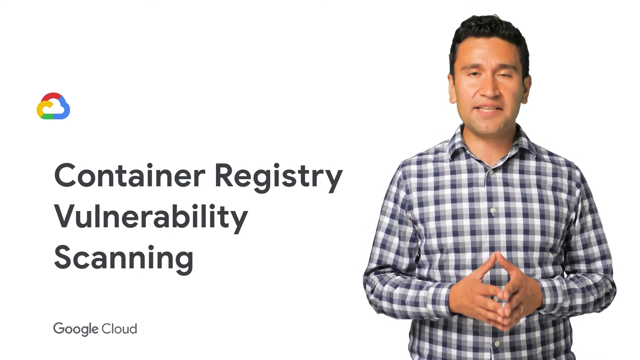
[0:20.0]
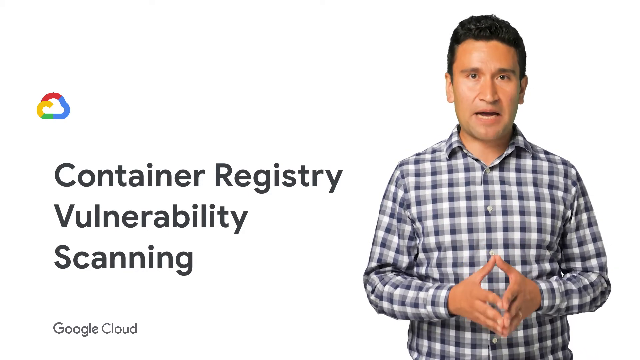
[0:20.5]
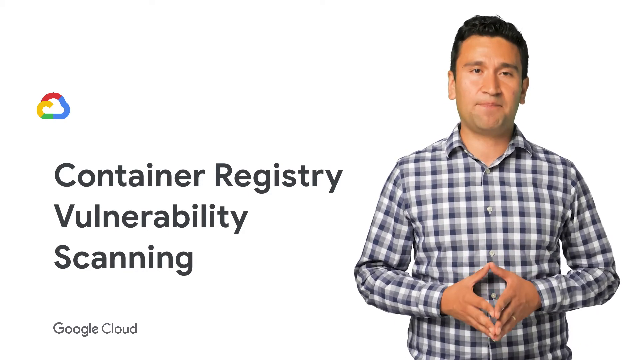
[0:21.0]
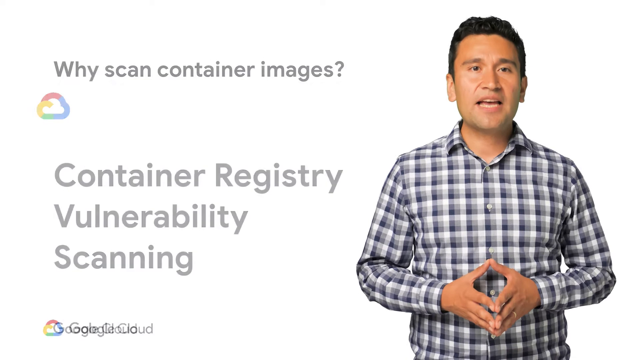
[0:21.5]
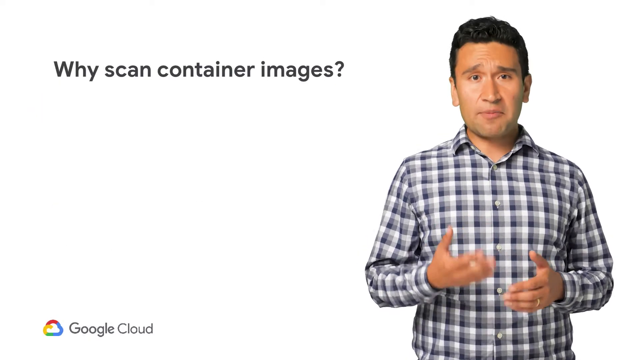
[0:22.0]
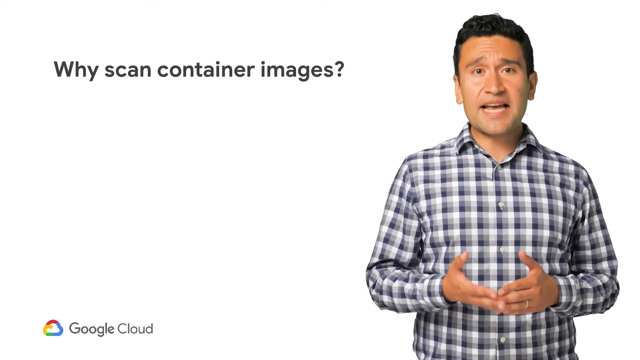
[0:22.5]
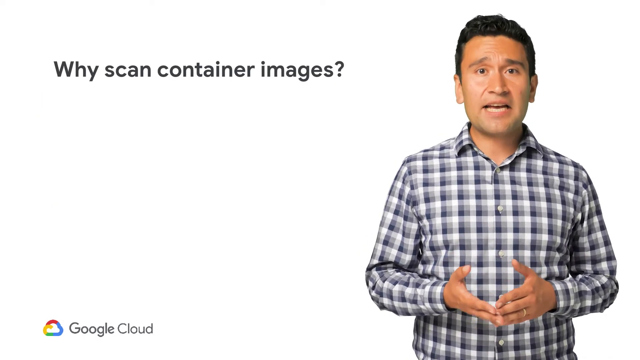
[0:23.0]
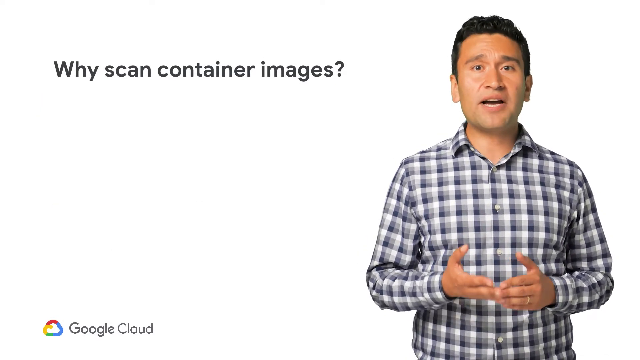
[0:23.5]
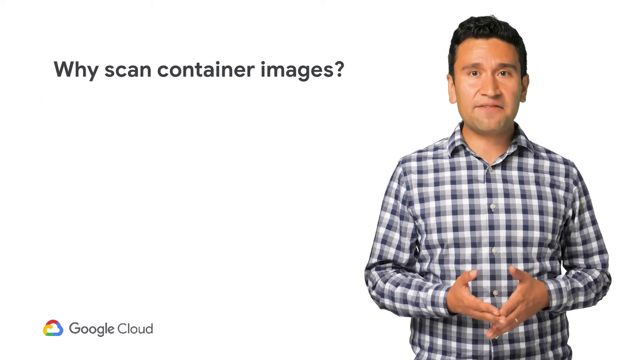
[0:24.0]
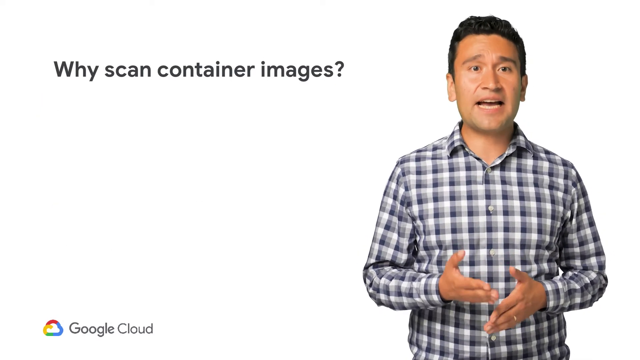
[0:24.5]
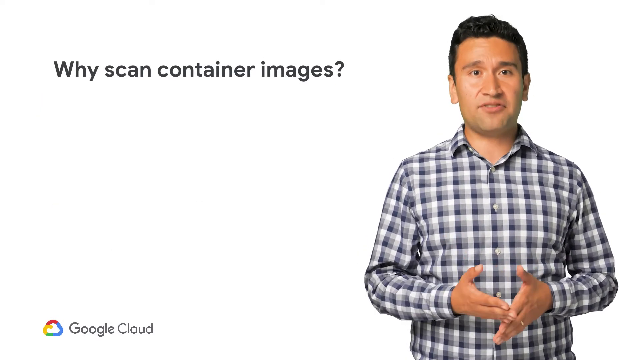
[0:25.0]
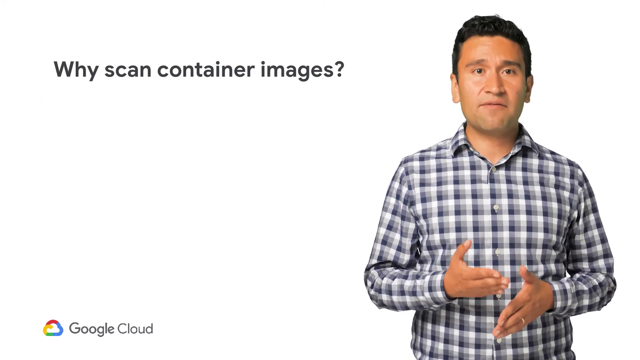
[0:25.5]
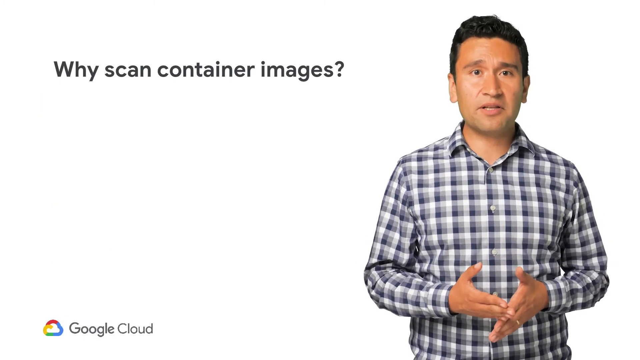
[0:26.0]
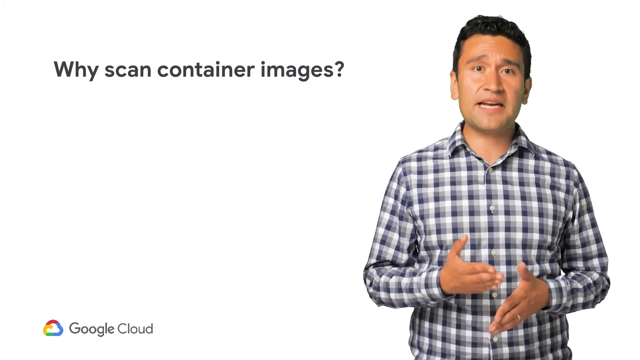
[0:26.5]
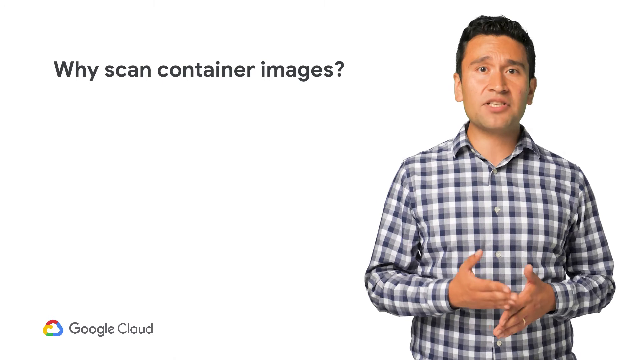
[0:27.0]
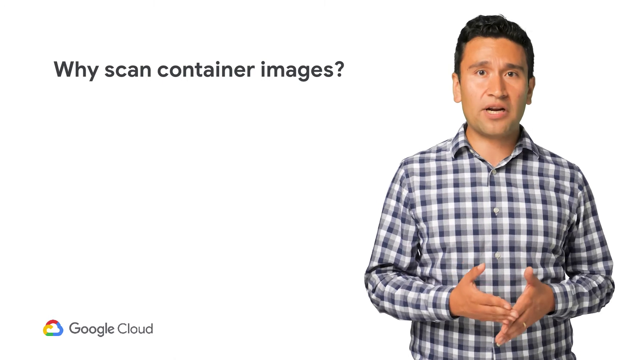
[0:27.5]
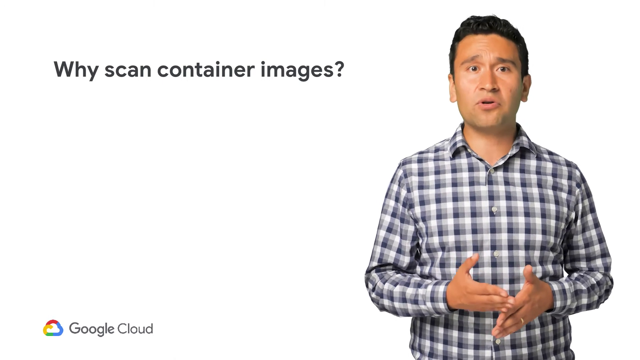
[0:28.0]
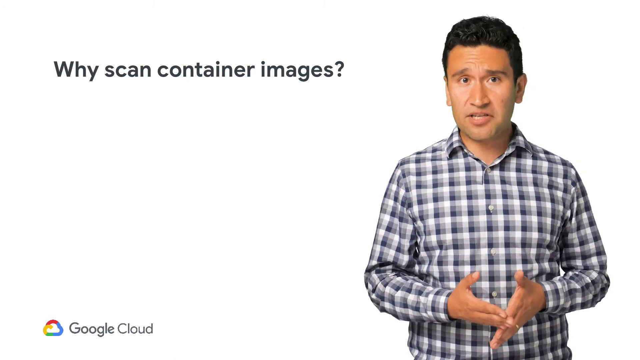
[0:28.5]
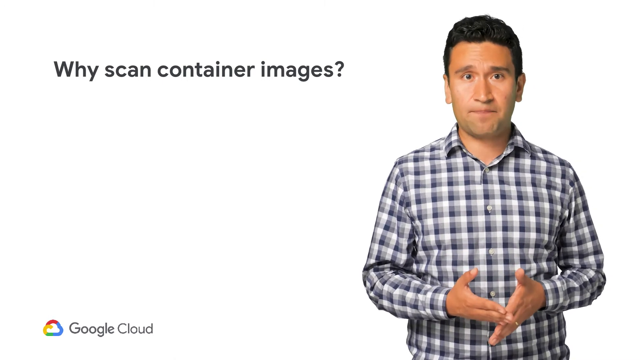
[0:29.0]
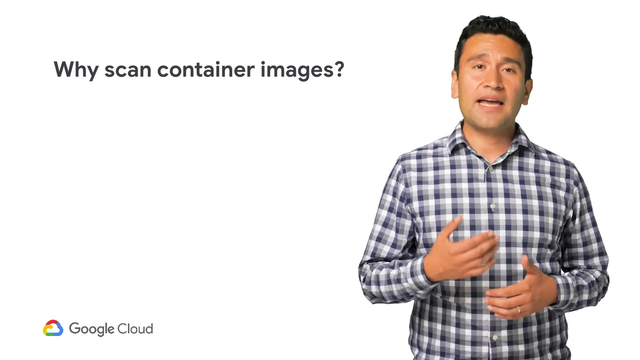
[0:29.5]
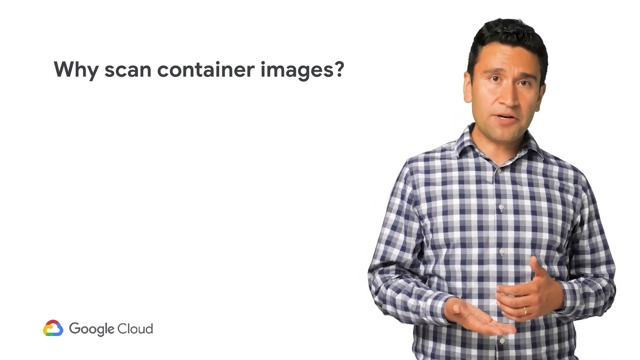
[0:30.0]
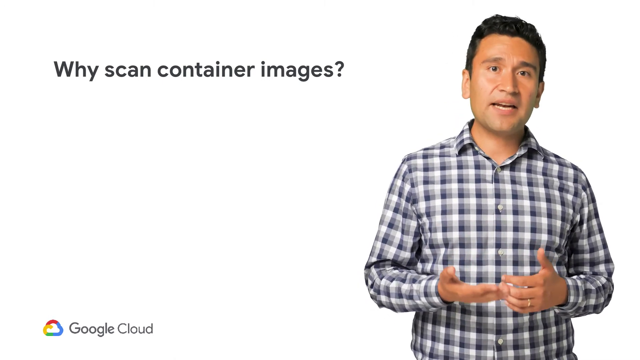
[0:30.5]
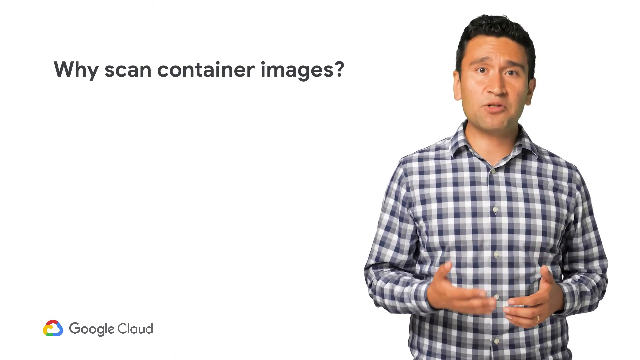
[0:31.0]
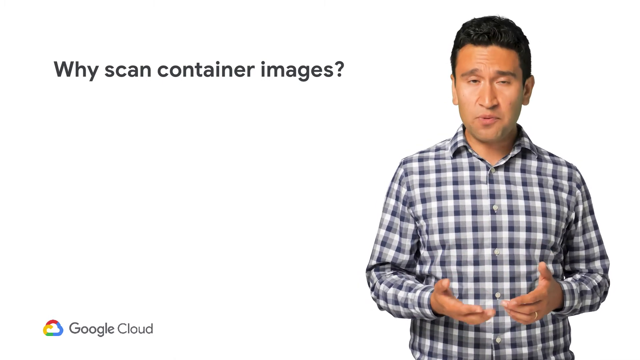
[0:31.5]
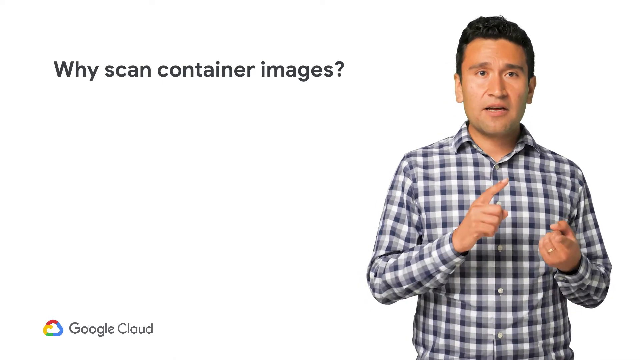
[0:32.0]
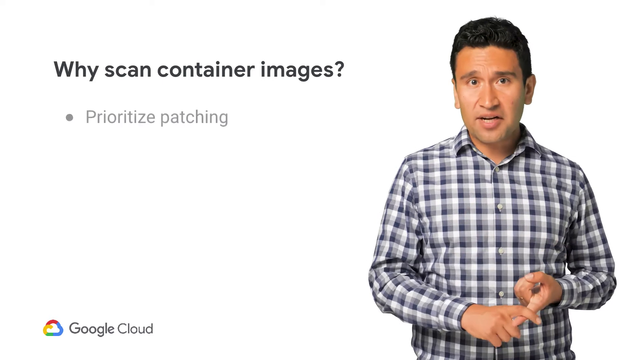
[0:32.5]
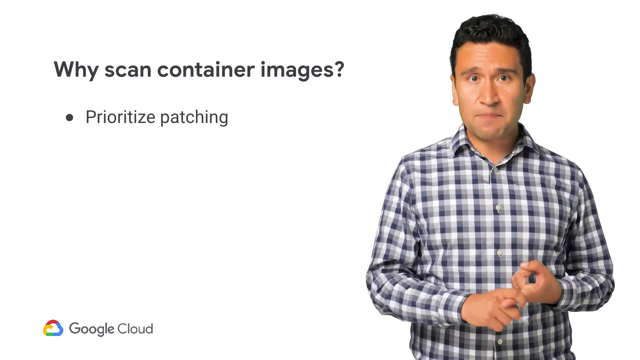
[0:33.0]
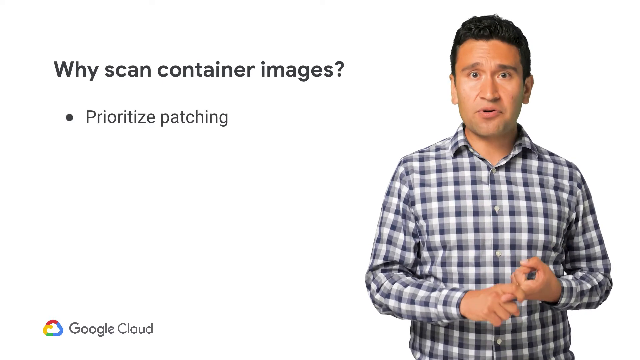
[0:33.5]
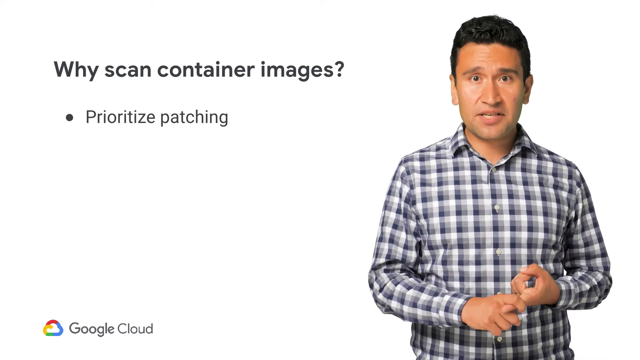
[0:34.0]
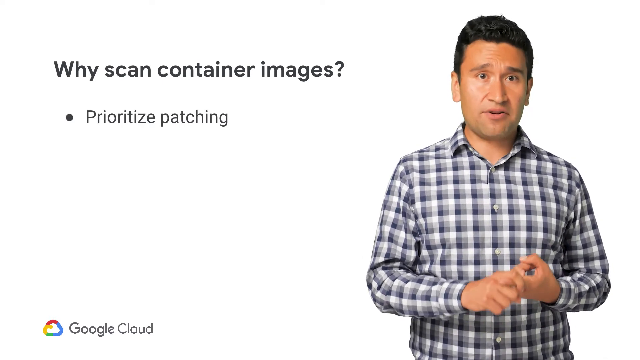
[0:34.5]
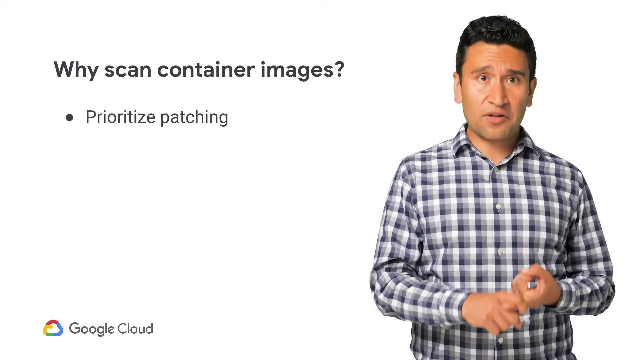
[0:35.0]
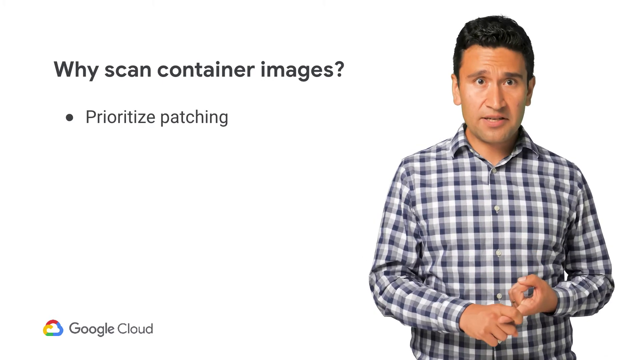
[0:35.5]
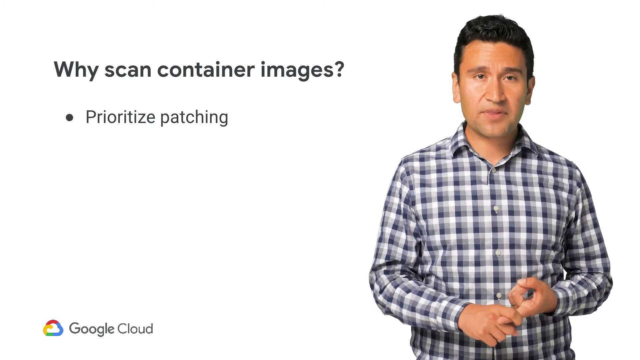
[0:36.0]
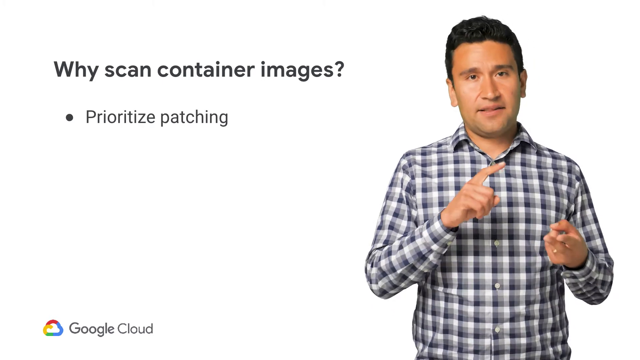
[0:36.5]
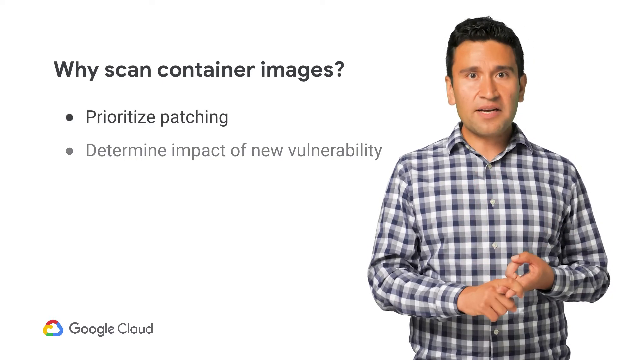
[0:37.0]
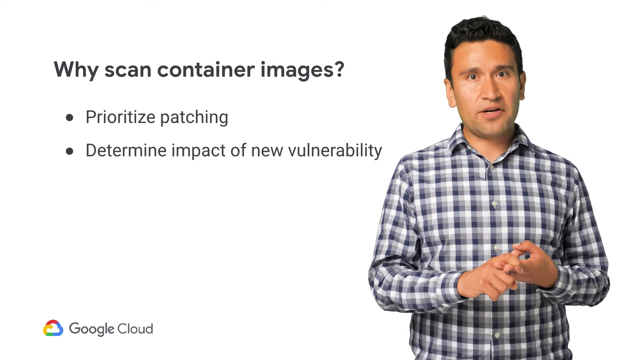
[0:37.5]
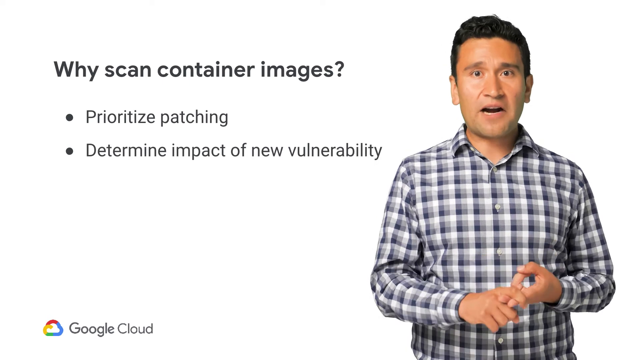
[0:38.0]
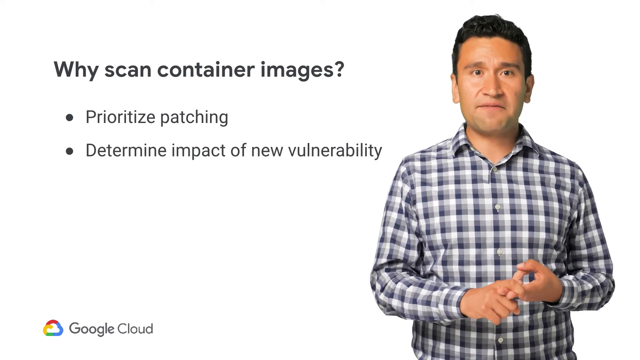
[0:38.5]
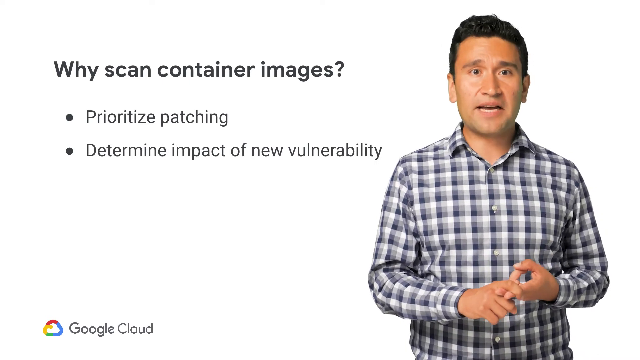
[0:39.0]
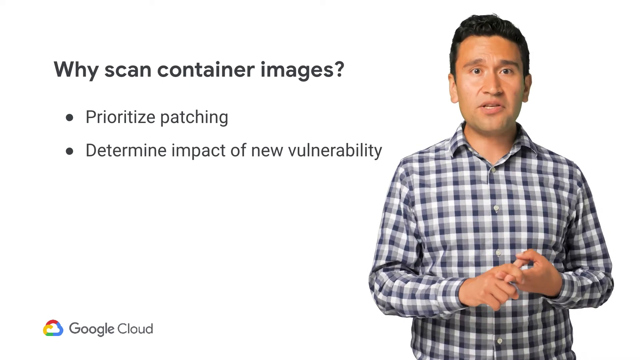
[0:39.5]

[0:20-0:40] On a solid white background, a small logo is on the left side; it seems to be a cloud, hollow or white inside, with a rainbow-colored outside in red, blue, green, and yellow. Underneath are three lines of large, black, sans-serif text reading "Container Registry Vulnerability Scanning." On the right side is a man seen from the waist up, wearing a gray plaid button-up shirt, with short dark brown hair. He holds his hands in front of him, sort of touching each other, and uses them as he speaks. He wears a gold ring on his left ring finger. The text then changes to "Why Scan Container Images?" with a point underneath reading "Prioritize patching. Determine impact of new vulnerability."